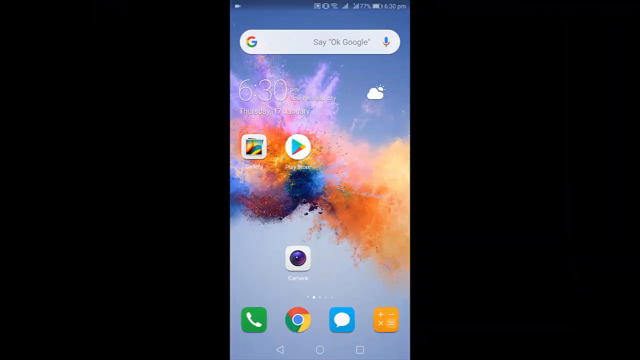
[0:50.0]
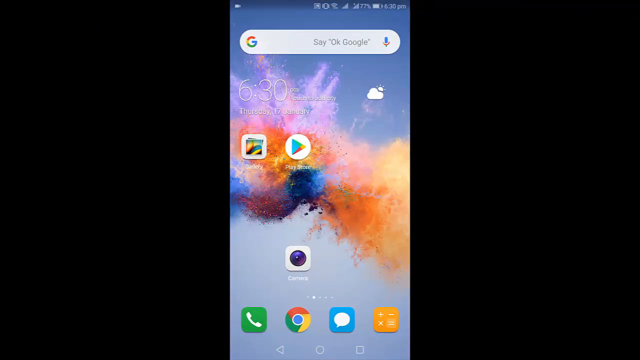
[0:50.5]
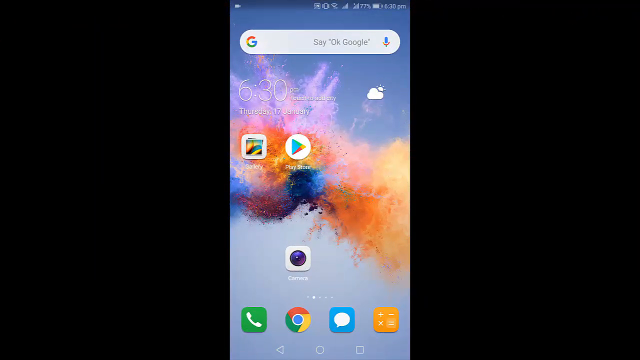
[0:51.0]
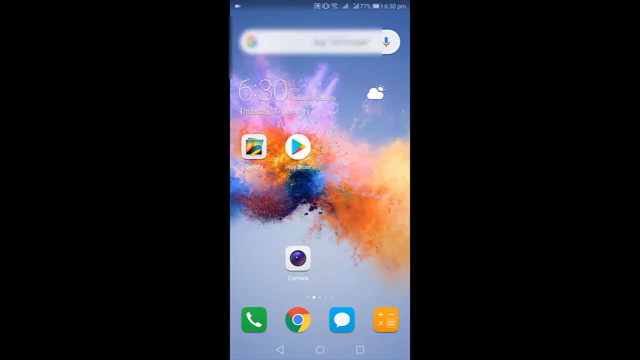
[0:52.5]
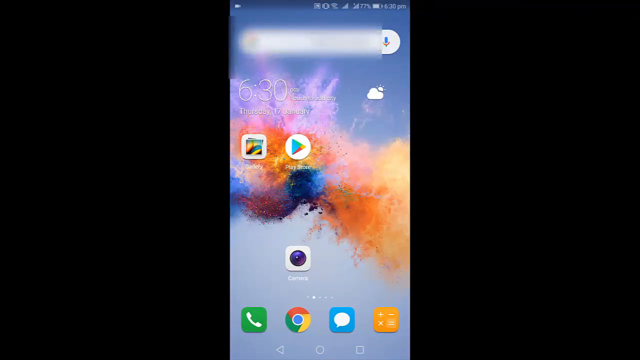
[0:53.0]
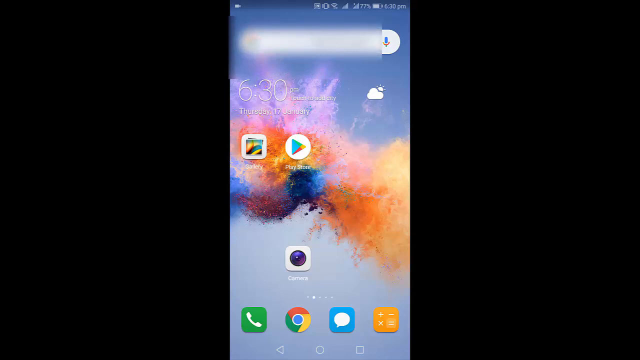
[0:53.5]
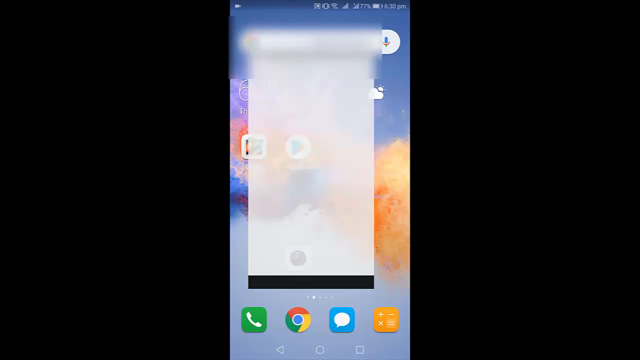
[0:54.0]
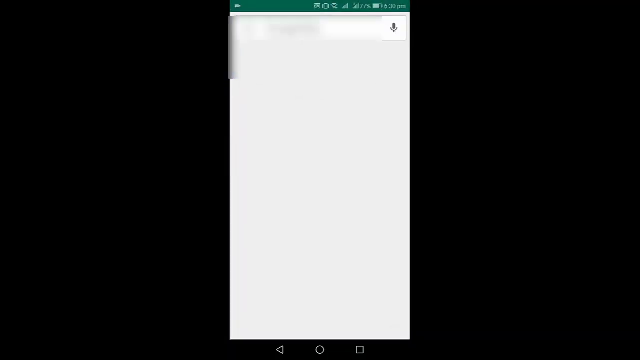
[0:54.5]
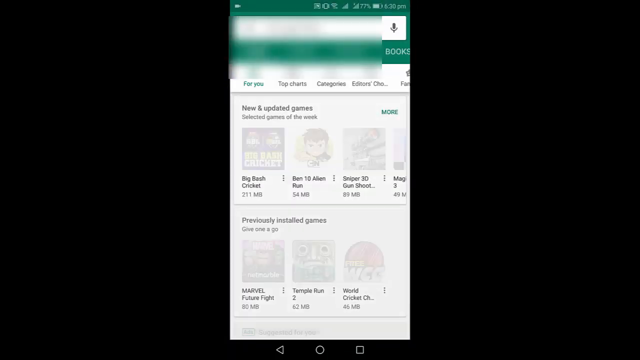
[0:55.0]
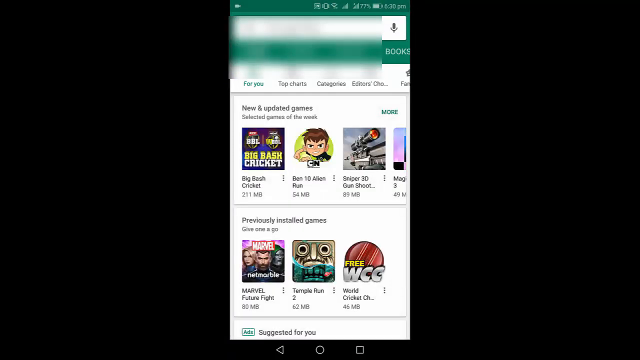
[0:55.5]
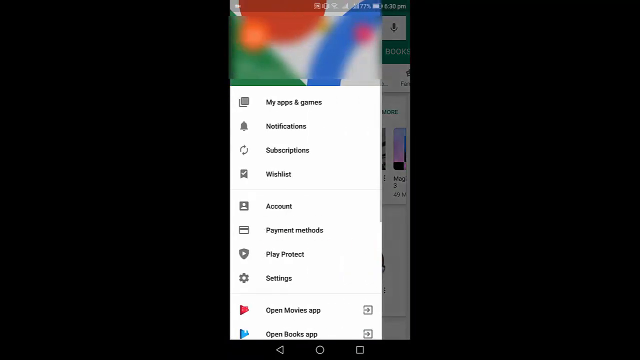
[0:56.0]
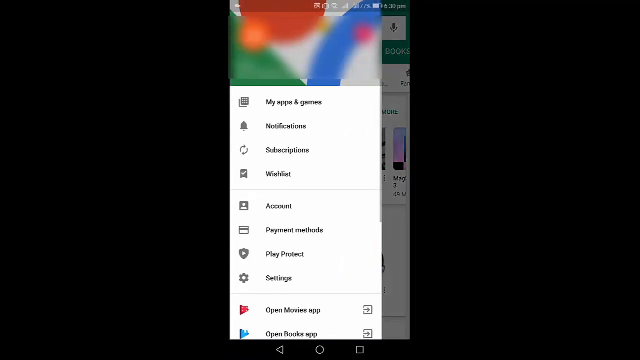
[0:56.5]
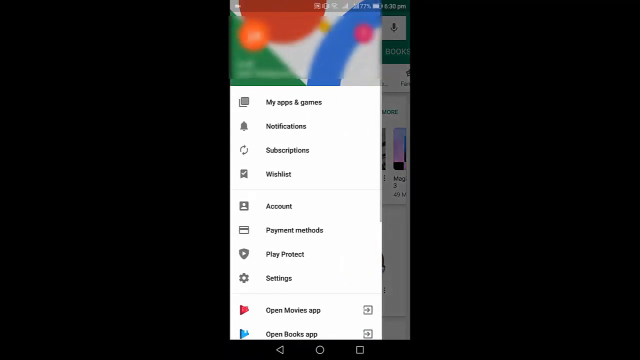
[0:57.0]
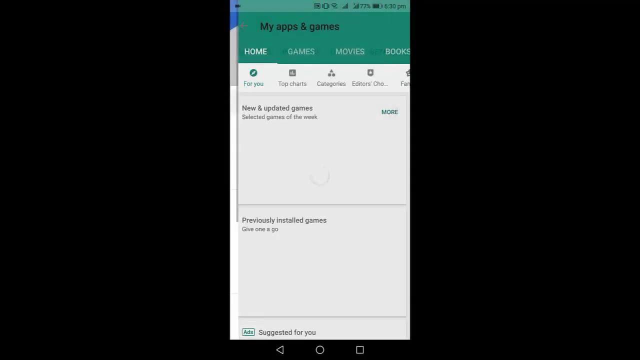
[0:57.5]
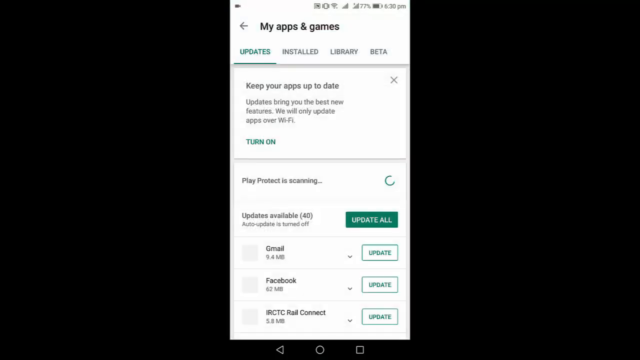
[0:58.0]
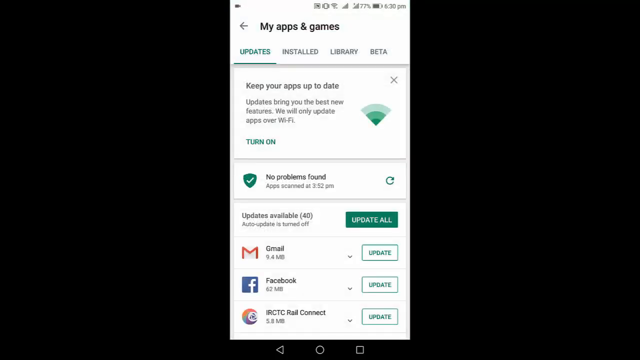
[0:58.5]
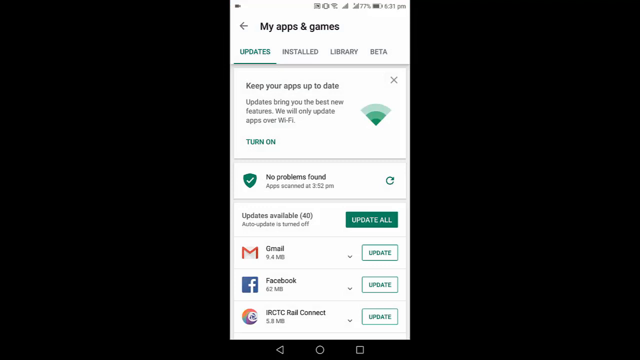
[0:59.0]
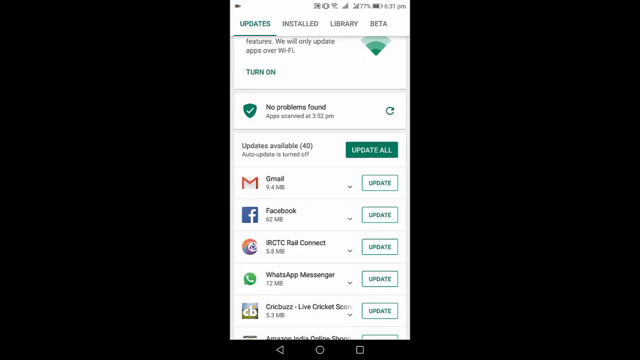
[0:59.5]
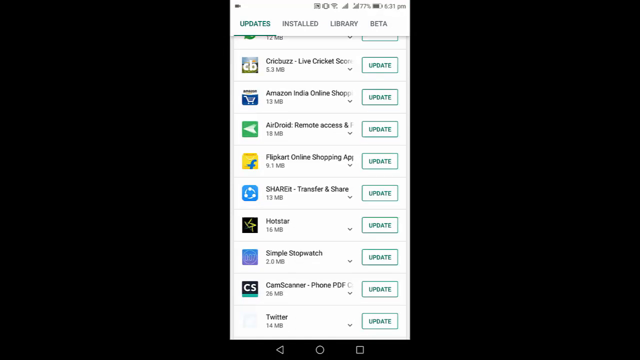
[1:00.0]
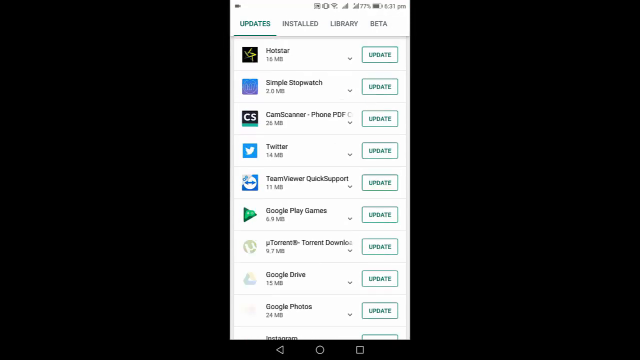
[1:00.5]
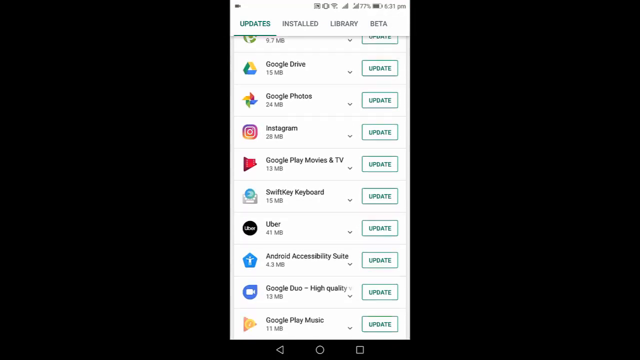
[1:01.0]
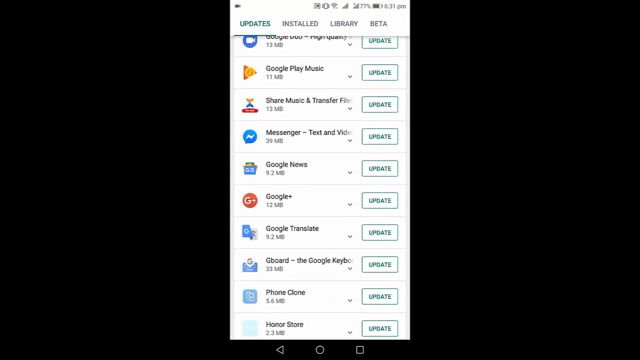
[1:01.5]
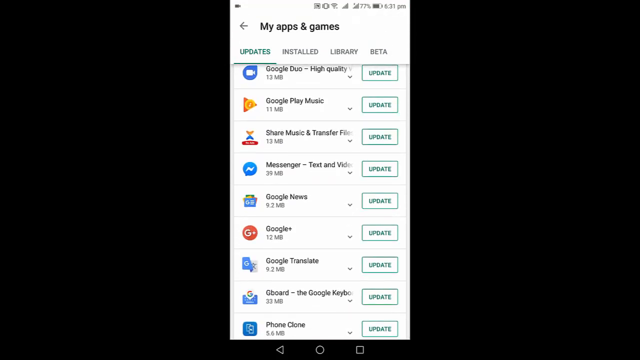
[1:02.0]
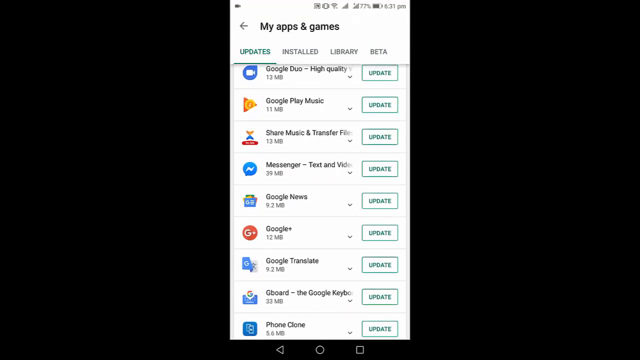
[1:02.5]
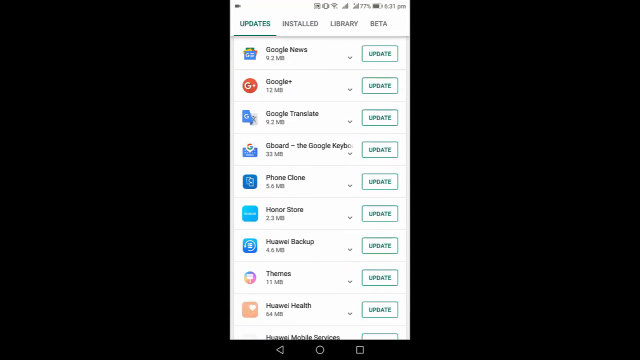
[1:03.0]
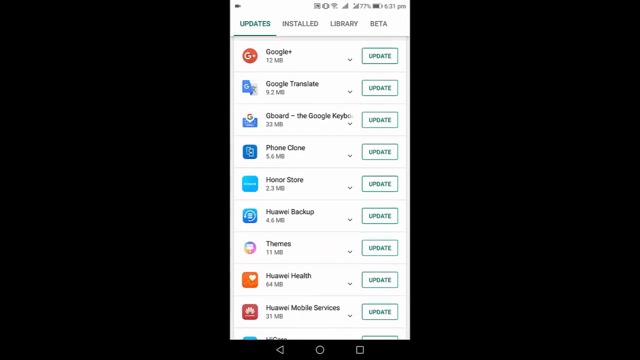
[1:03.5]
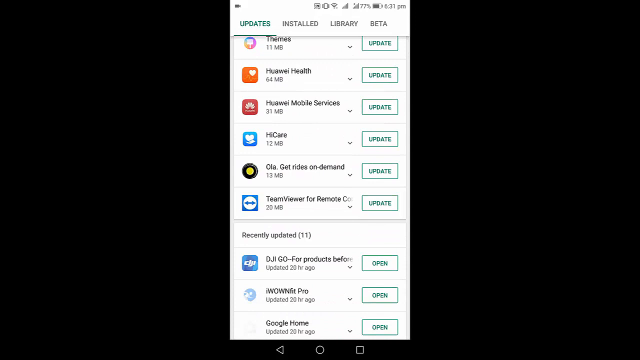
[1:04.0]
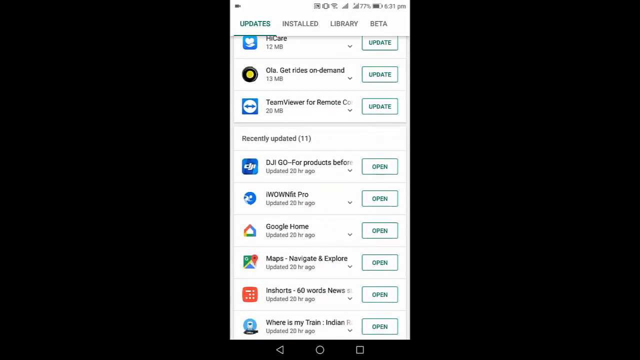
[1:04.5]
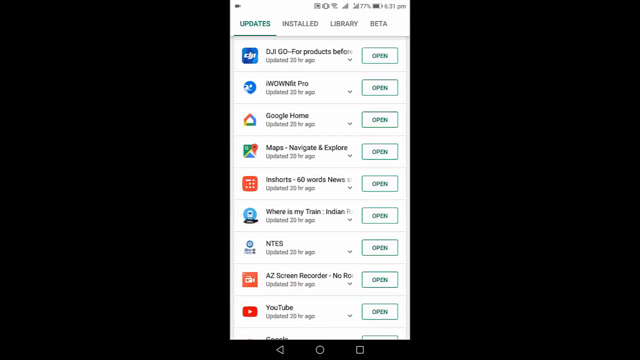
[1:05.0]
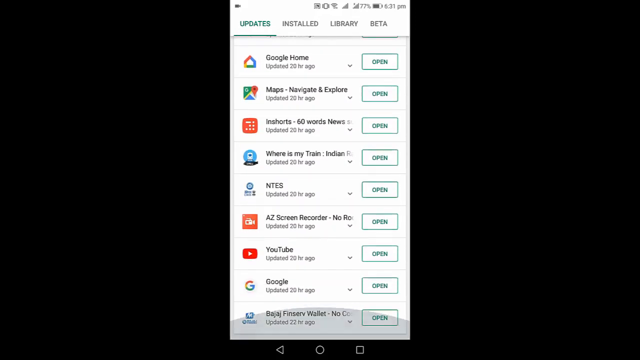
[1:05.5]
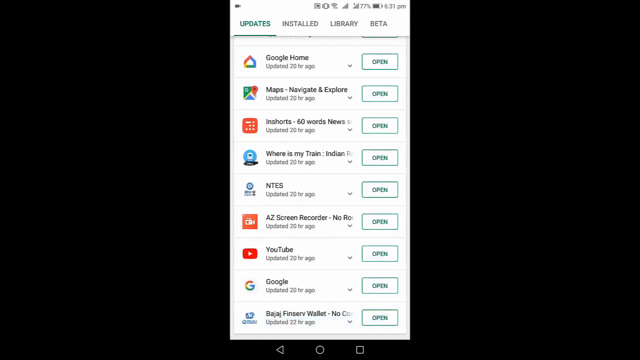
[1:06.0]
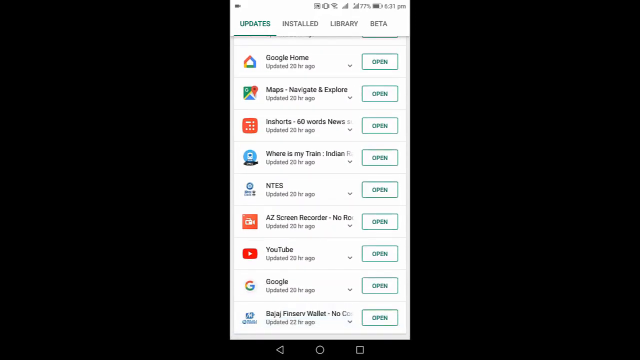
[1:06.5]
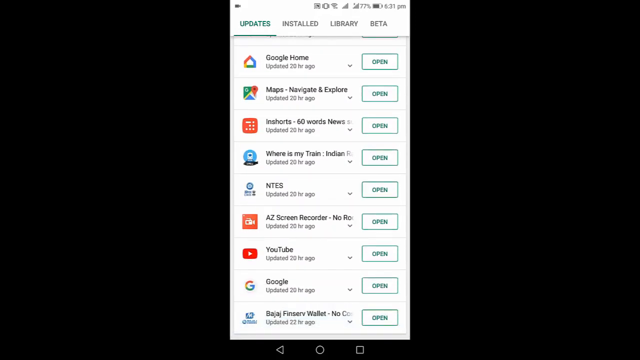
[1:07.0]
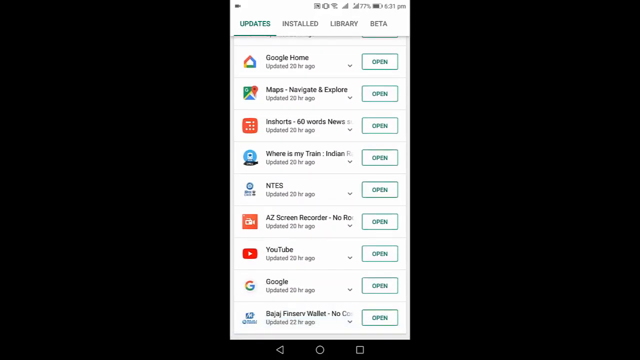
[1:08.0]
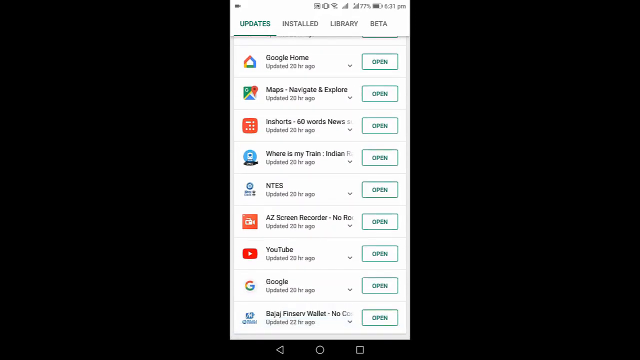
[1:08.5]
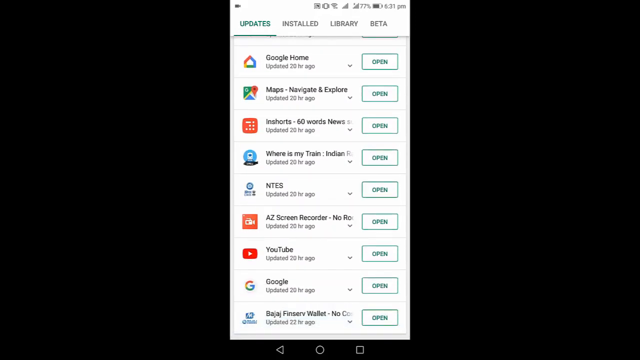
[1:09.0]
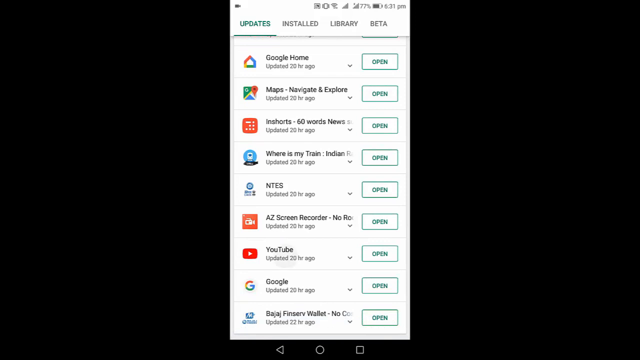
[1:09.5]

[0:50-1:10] On the Android home screen, the user clicks on Play Store. As it loads, the top part is somewhat blurred. On the Play Store main page, he clicks the icon at the top left for more options, which displays settings such as My Apps and Games, Notifications, Subscriptions, Wishlist, Account, Payment Methods and Play Protect Settings. He apparently selects the first option, My Apps and Games, and starts scrolling down a screen that lists all the apps one after another. The first entry reads "keep your apps up to date. Updates will bring you the best new features. We will only update apps over Wi-Fi." It does not seem to be turned on, as there is text reading "turn on". He scrolls through the apps, each with an update button on the right, all the way down to YouTube.